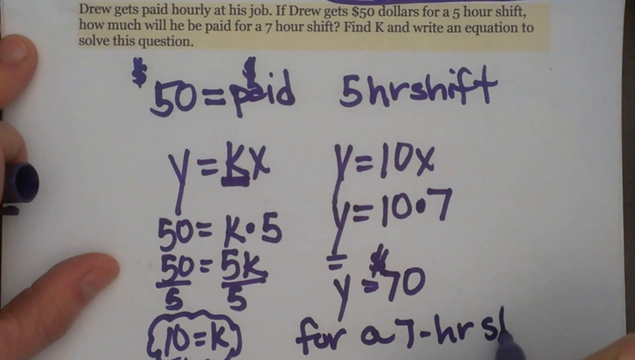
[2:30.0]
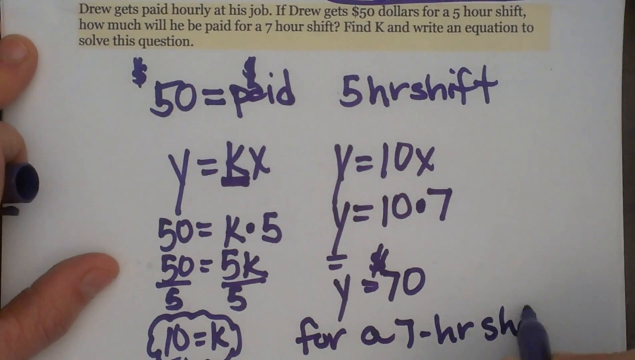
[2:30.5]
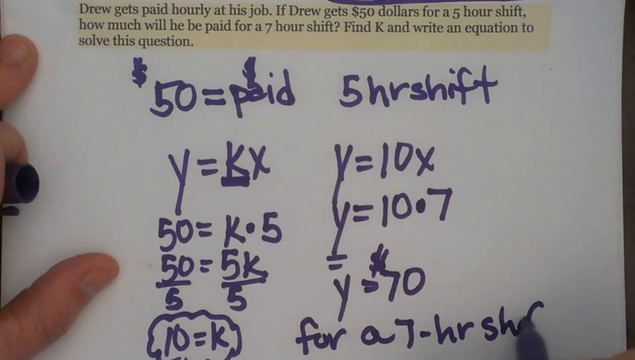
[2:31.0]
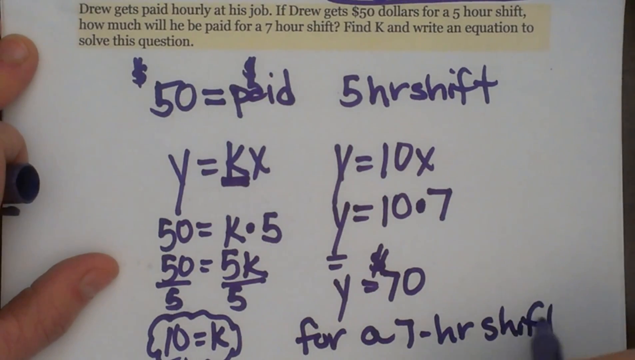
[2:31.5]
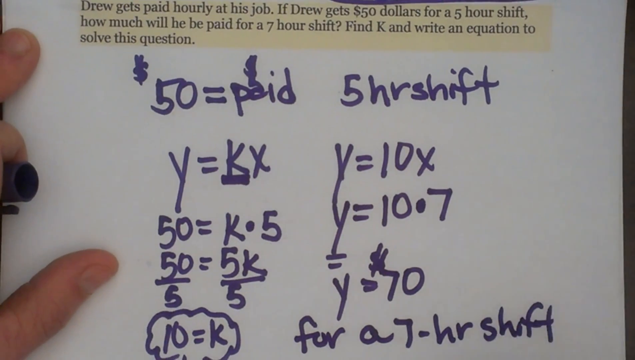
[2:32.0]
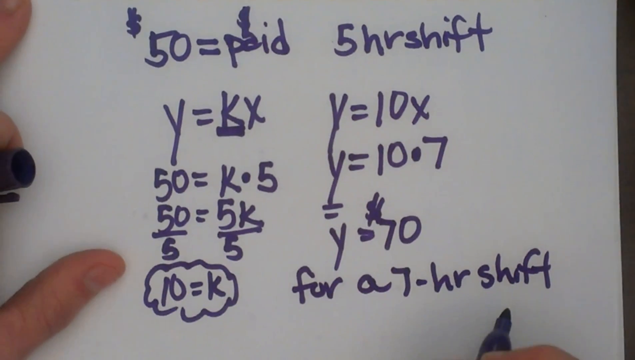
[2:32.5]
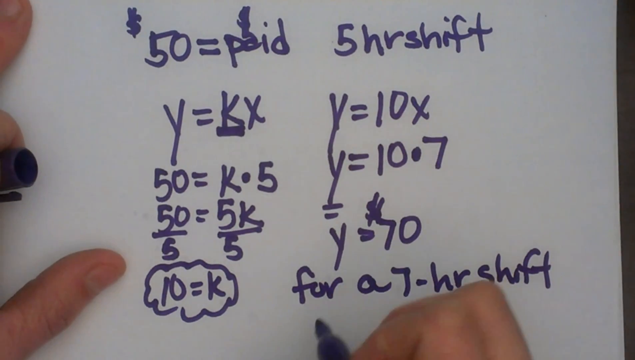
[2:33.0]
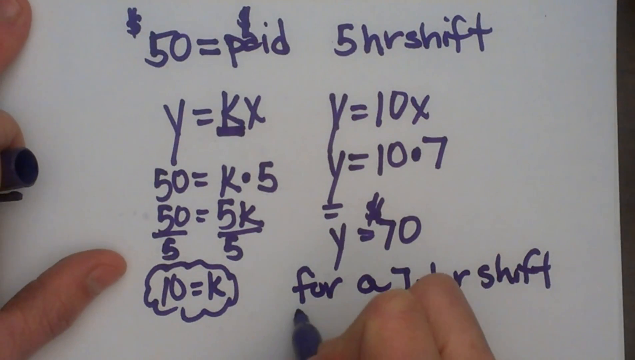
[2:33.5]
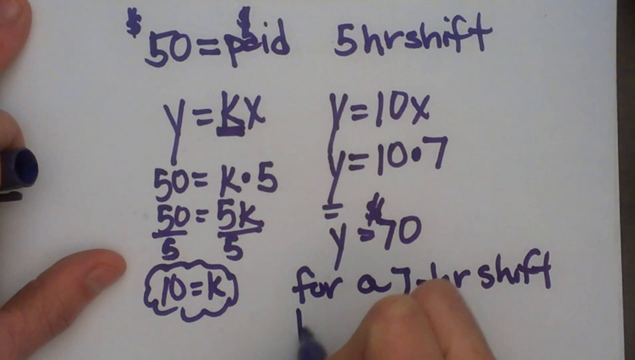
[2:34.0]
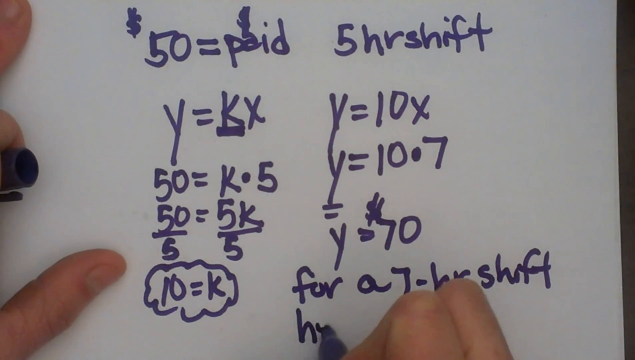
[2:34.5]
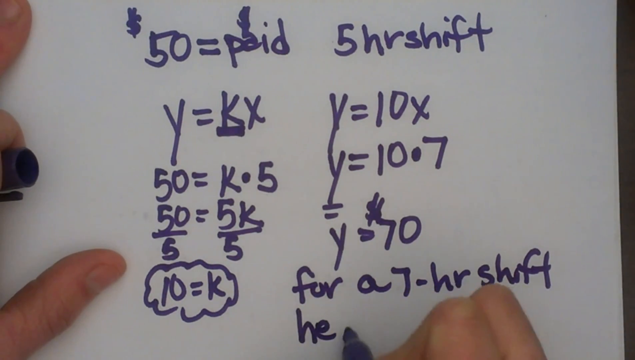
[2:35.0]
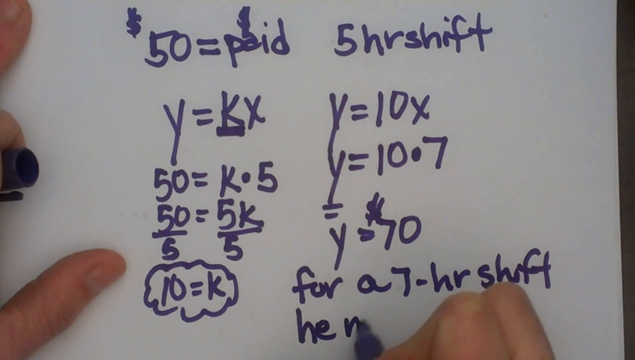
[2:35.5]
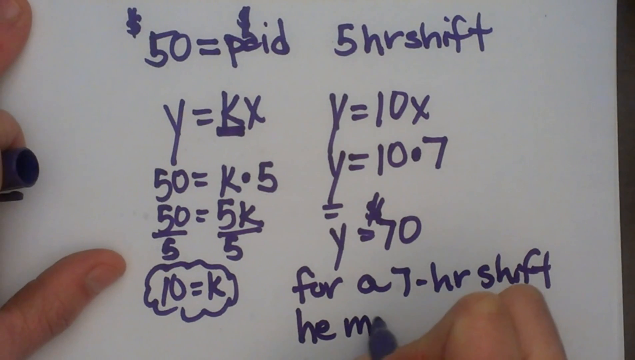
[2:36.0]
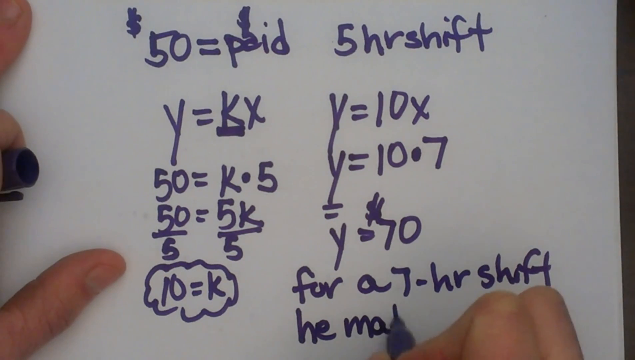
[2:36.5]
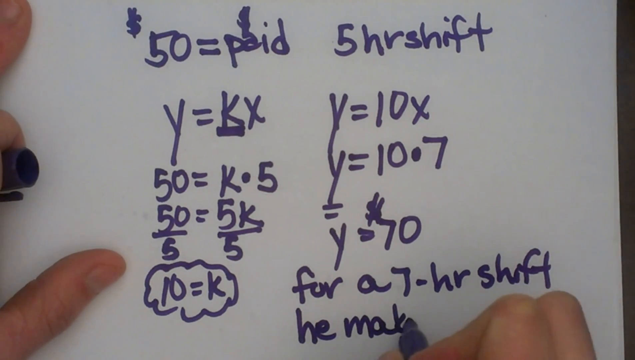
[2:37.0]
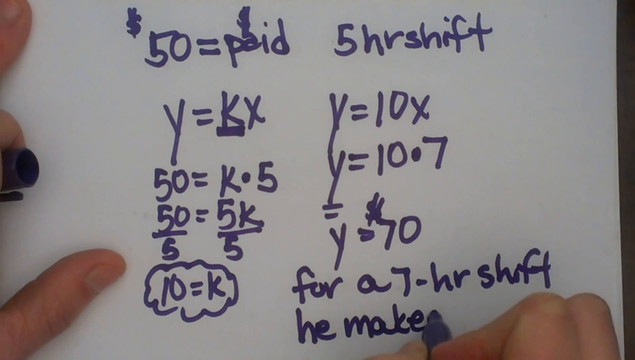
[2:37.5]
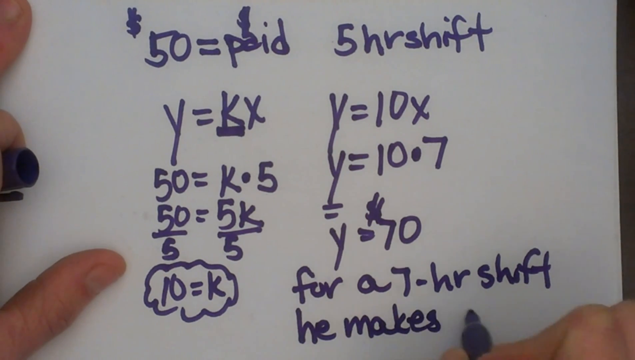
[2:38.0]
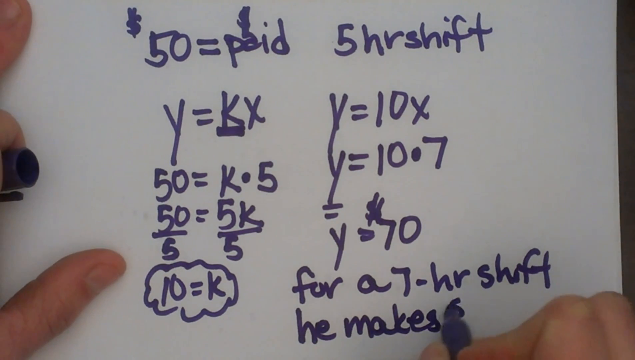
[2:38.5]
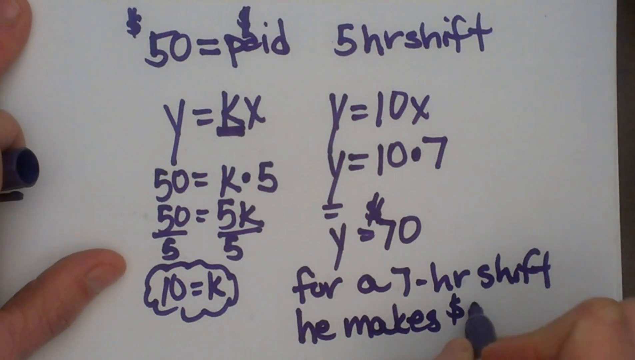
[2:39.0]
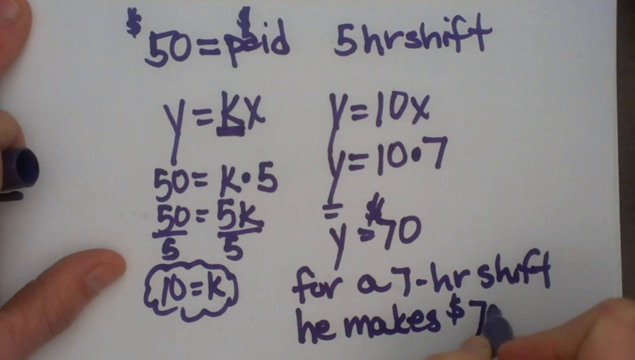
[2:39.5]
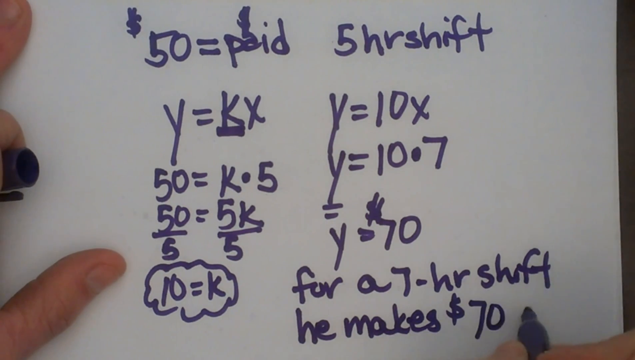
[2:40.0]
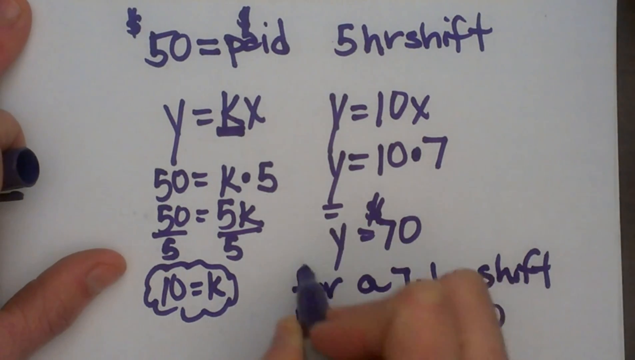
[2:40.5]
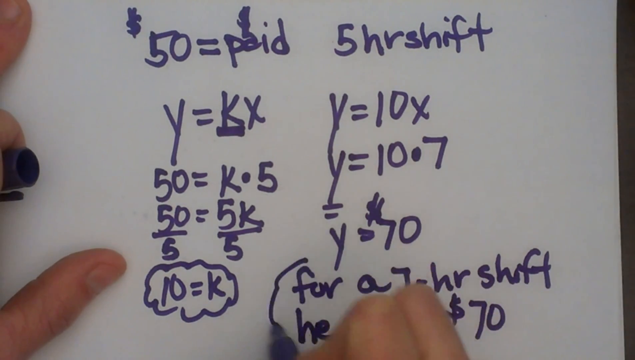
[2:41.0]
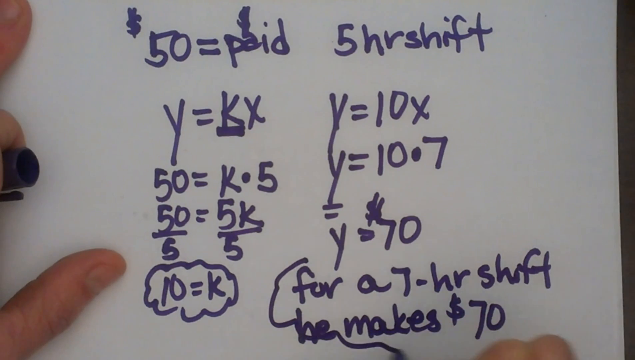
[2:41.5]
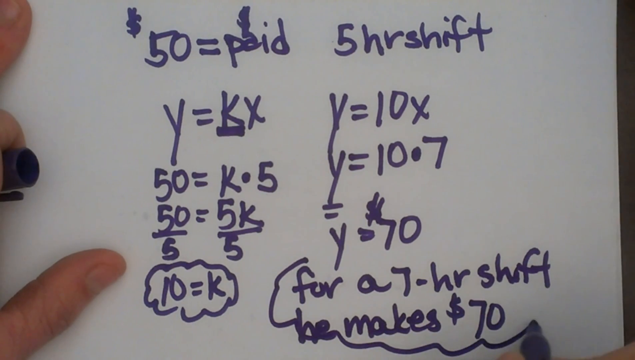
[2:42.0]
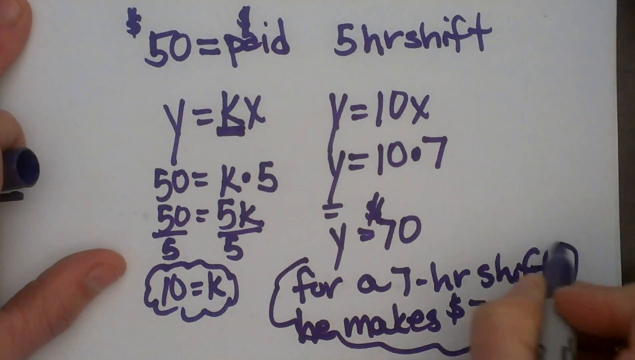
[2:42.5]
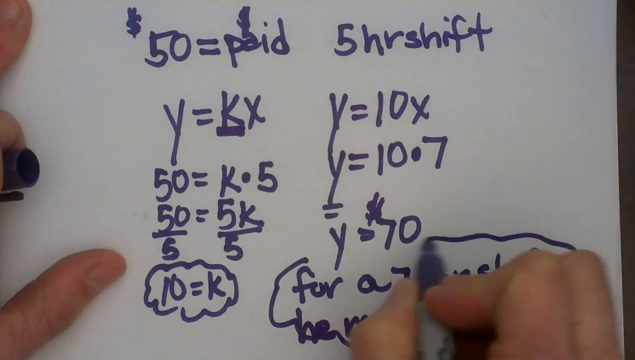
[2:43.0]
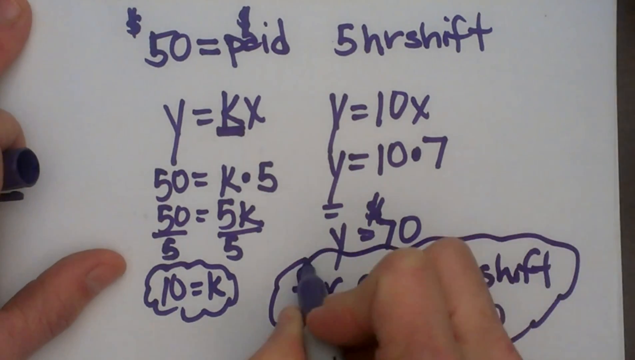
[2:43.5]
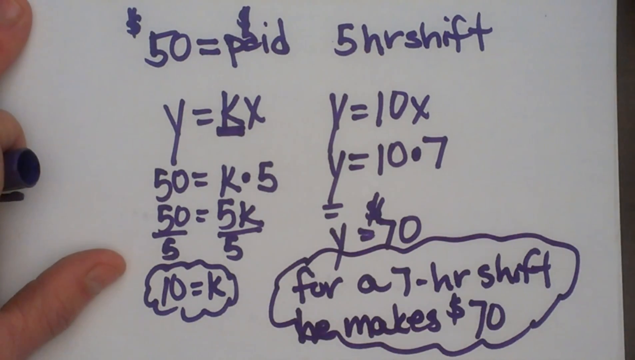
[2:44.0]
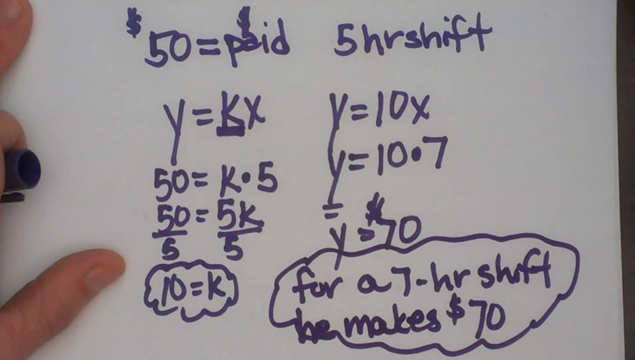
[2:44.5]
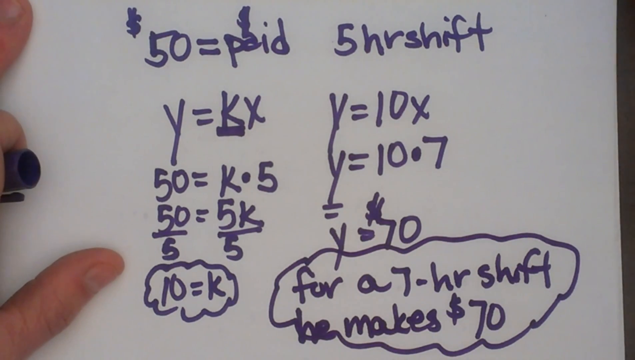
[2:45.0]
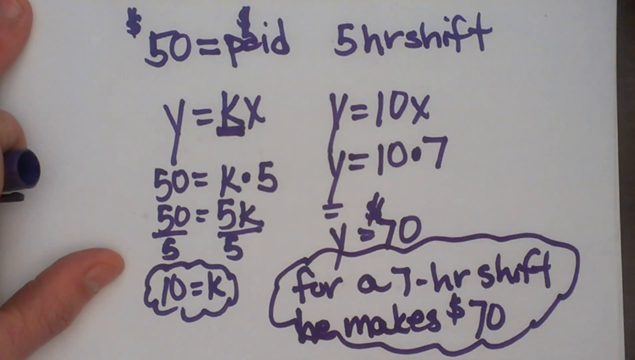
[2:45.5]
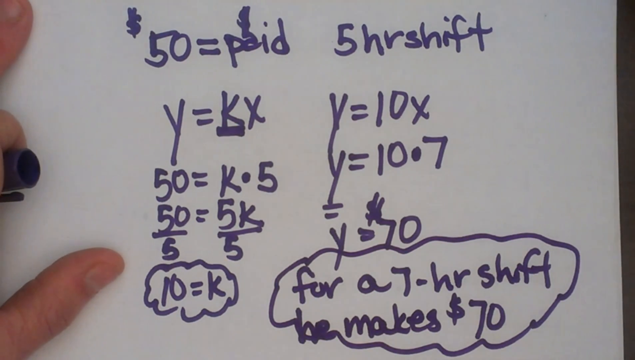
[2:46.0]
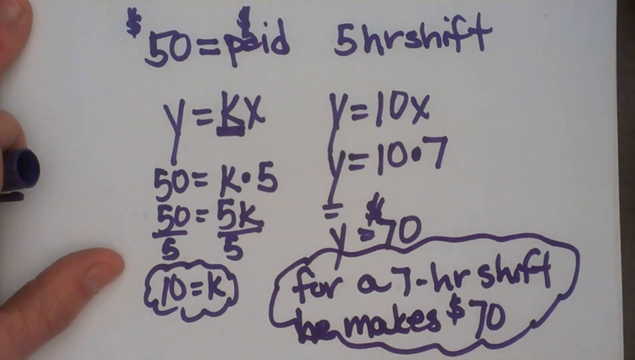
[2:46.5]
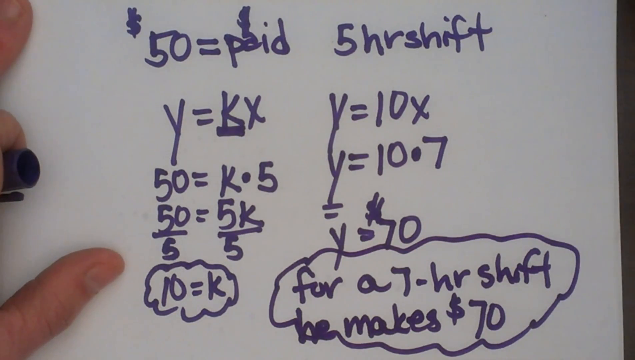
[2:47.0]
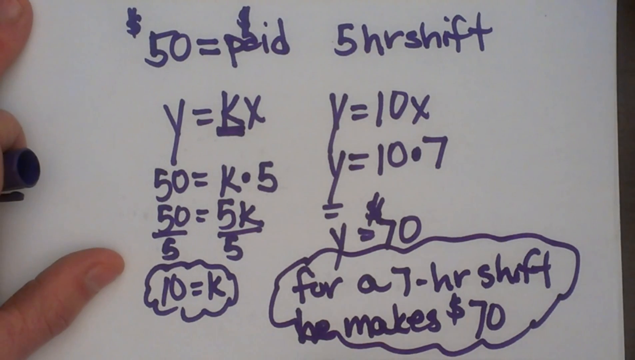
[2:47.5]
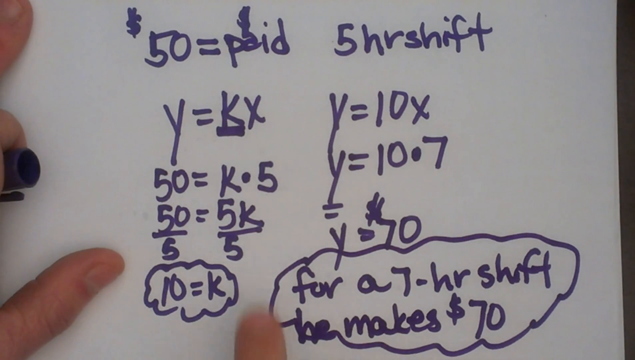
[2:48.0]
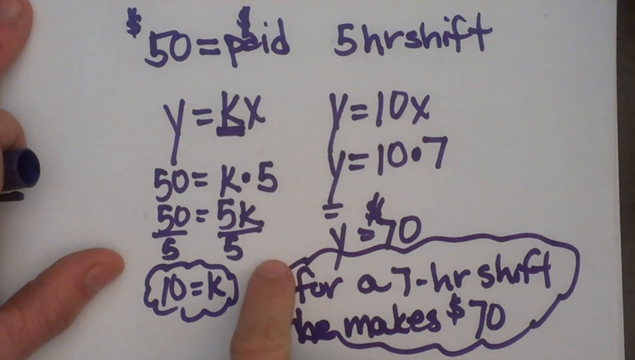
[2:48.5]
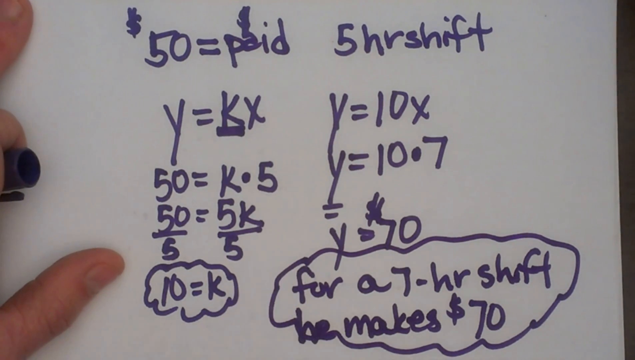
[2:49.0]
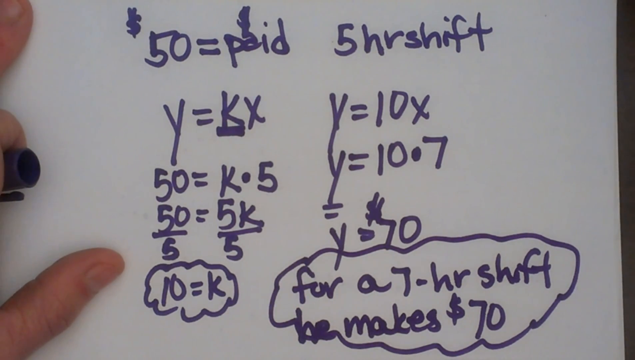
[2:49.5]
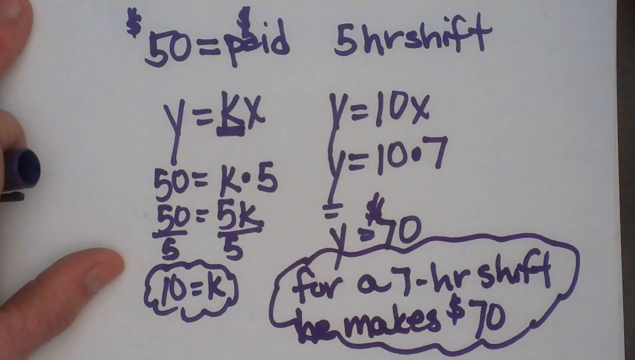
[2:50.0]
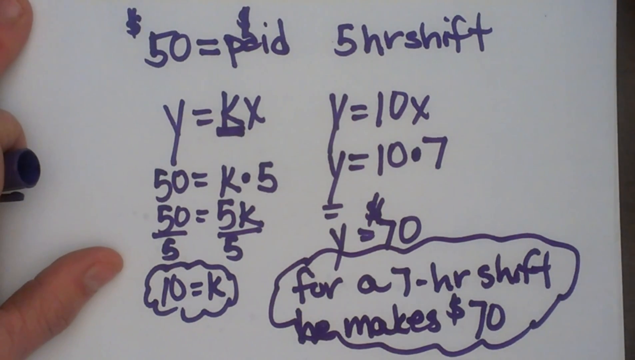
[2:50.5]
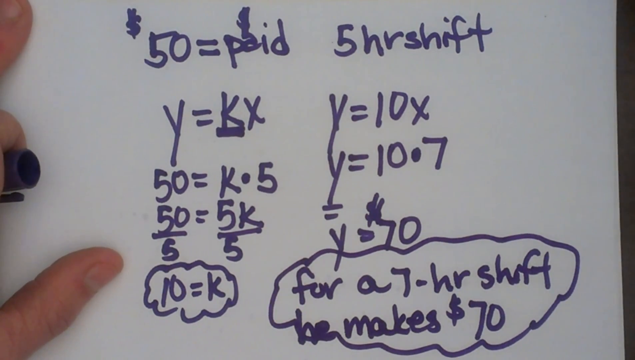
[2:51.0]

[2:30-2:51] A person works on an equation. A paragraph at the top, highlighted in yellow, asks how much someone would make for a seven-hour shift. The person holds a Sharpie in the right hand and has written equations: "$50 = paid", "five hour shift", "Y = KX" with the K underlined, "Y = 10X", "50 = K.5", "Y = 10.7", "50/5" and "5K/5", and "Y = $70". "10 = K" is circled with a small jagged-edged circle. After "Y = $70", the person writes "for a seven hour shift = $70" and circles it the same way, with jagged edges. The left hand holds the white piece of paper and does not move off its left side.